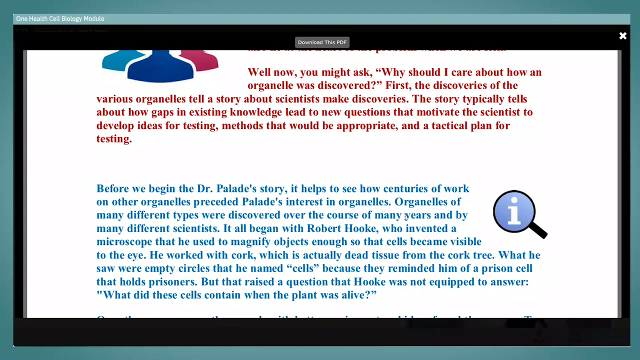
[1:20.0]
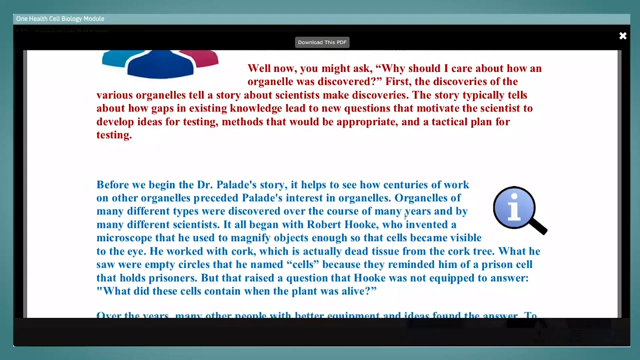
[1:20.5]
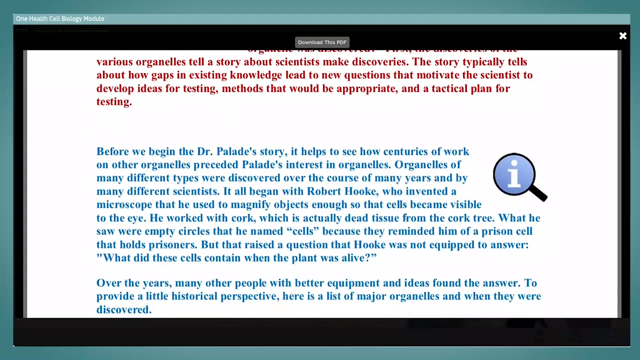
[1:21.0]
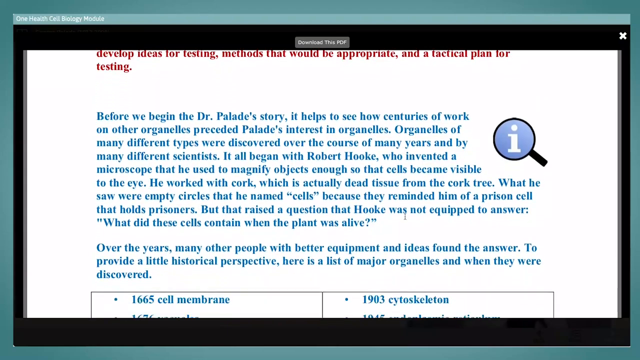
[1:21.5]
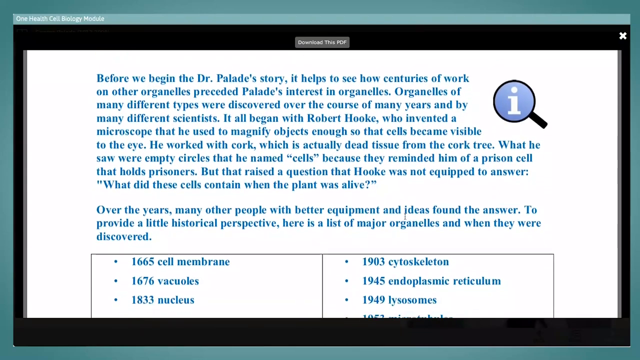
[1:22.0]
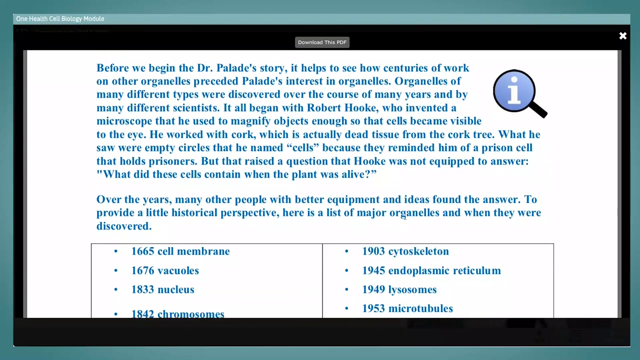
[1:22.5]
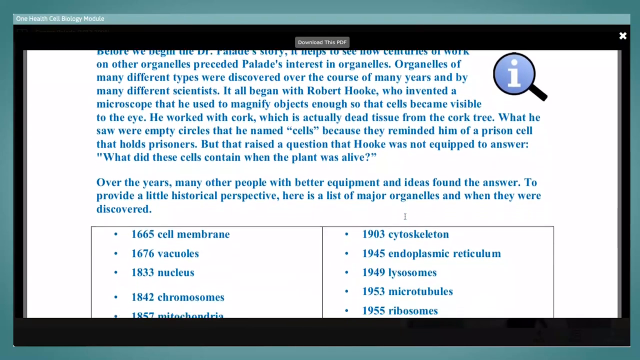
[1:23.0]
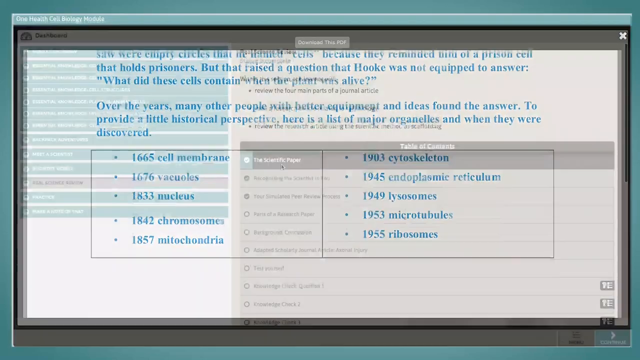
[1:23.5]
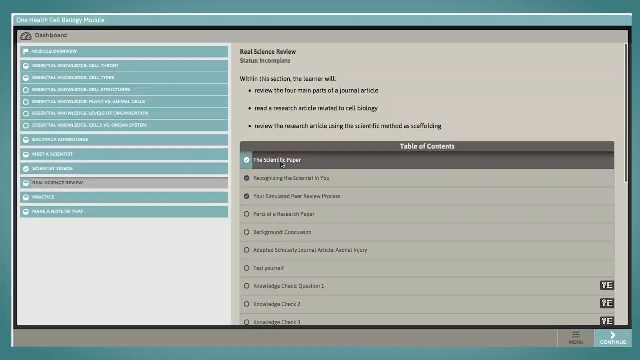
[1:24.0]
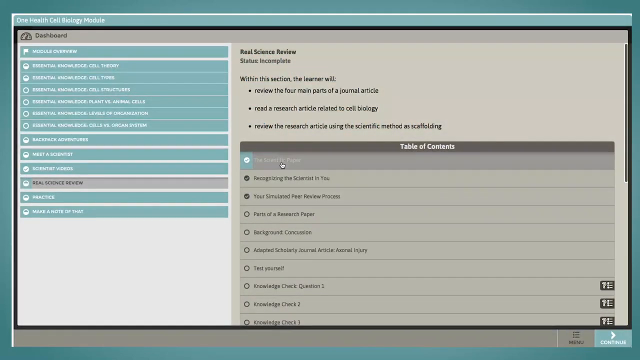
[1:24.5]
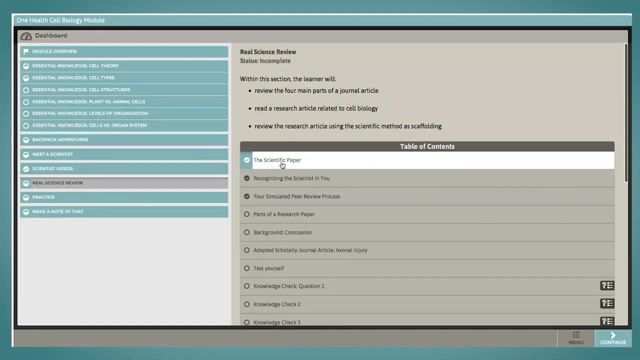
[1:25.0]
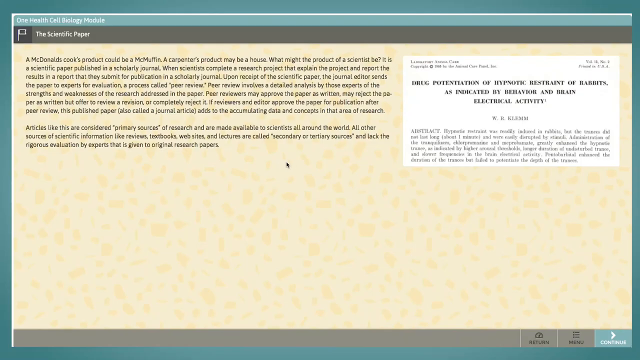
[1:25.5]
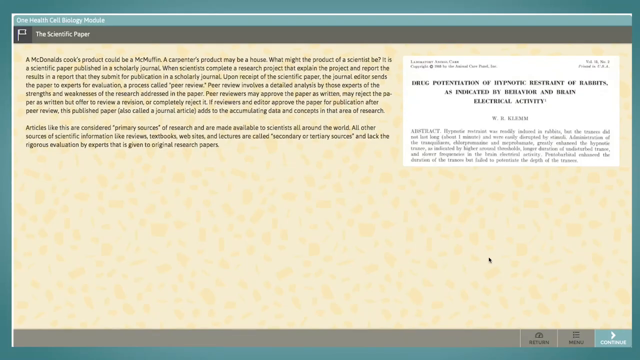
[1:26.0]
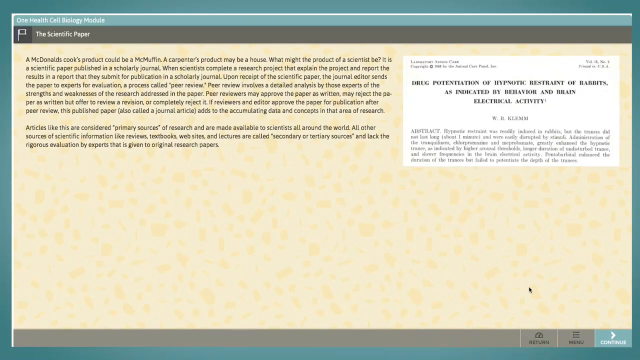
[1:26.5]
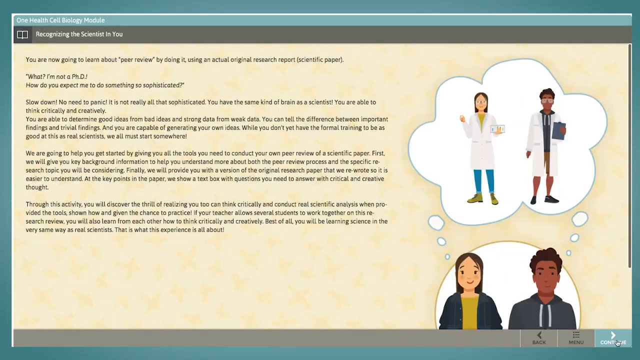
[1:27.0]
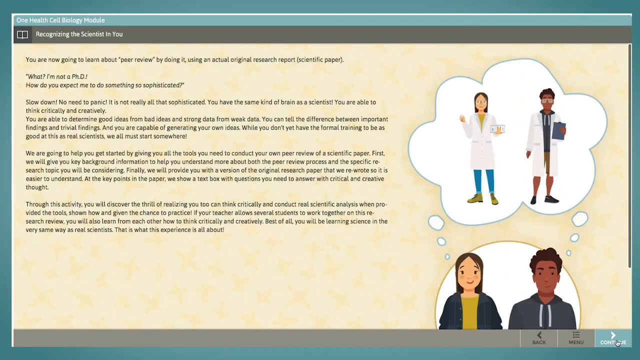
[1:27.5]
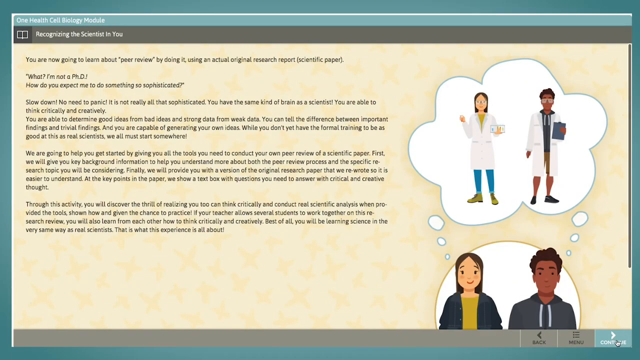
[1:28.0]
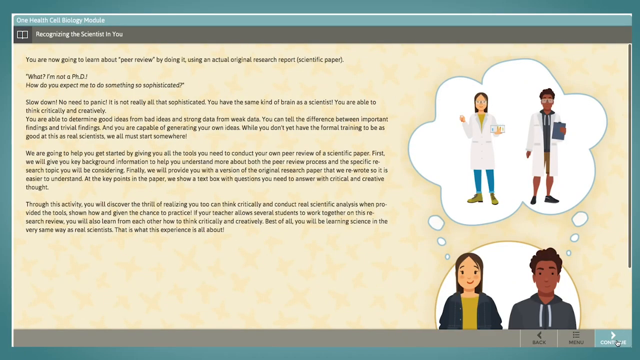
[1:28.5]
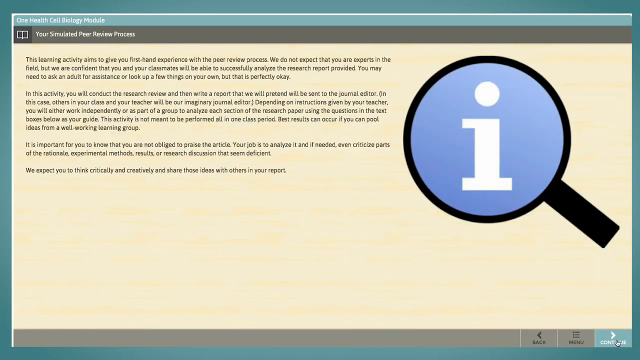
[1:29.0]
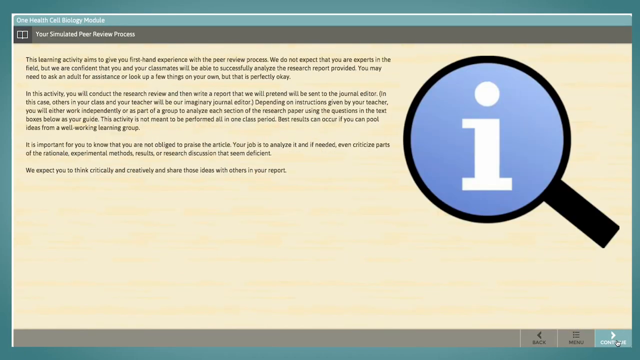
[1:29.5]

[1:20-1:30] A page from the One Health Cell Biology module has a white background and red text about cells; one paragraph is in blue text and concerns Dr. Palade. The page is scrolled down to show more text. The view returns to the module's homepage and another module is selected, opening a page with a yellow background labeled "the scientific paper". On the right is an inset photo of a paper about hypnotic restraint of rabbits, with black text on the left. Another page follows with black writing on a yellow background.